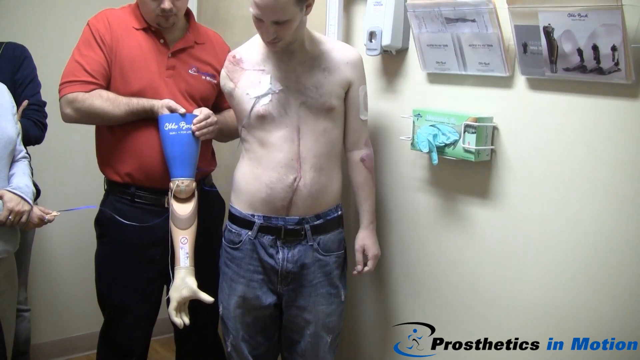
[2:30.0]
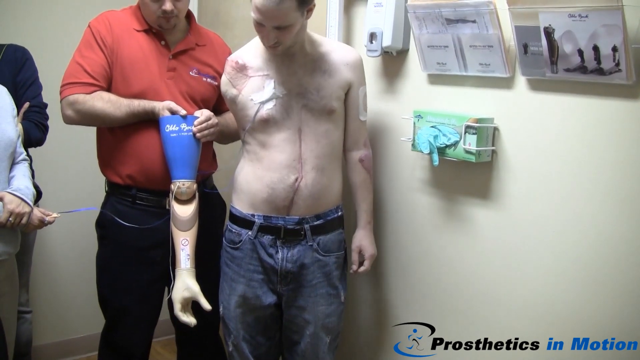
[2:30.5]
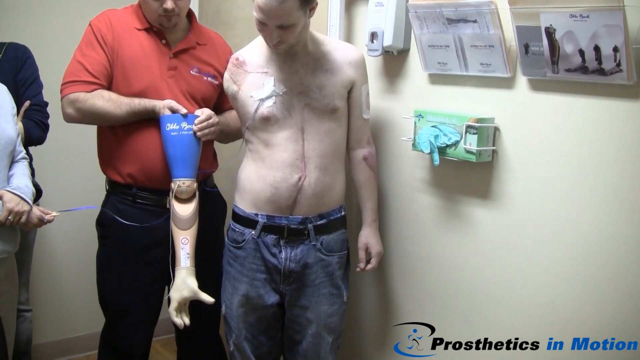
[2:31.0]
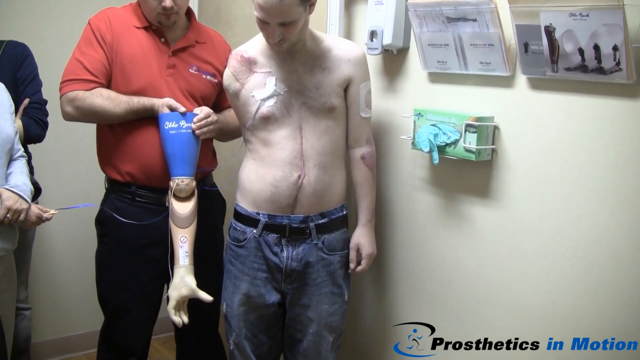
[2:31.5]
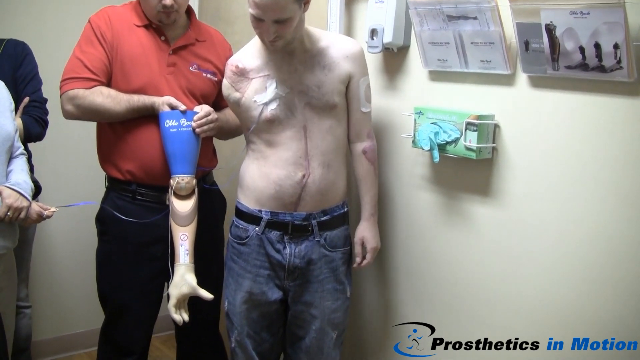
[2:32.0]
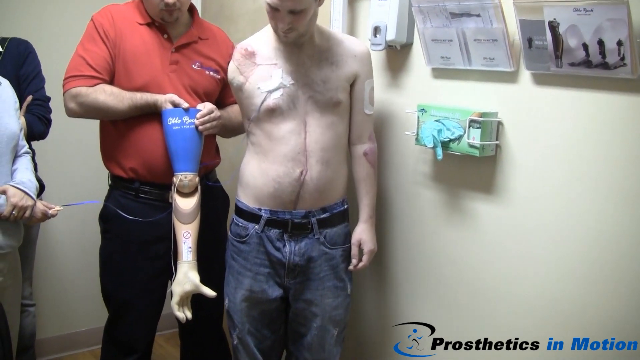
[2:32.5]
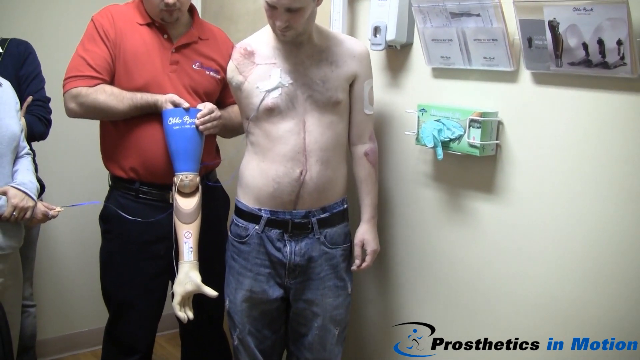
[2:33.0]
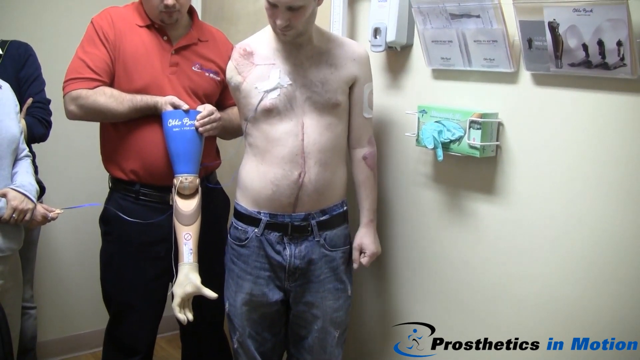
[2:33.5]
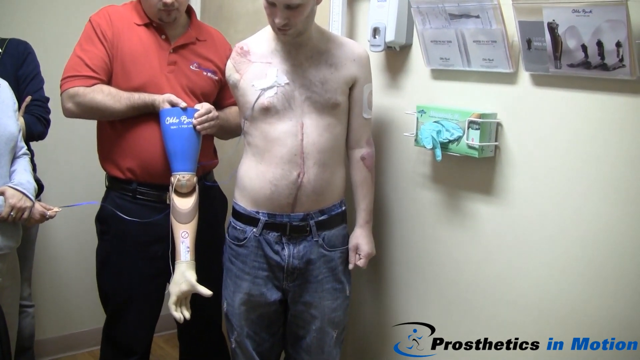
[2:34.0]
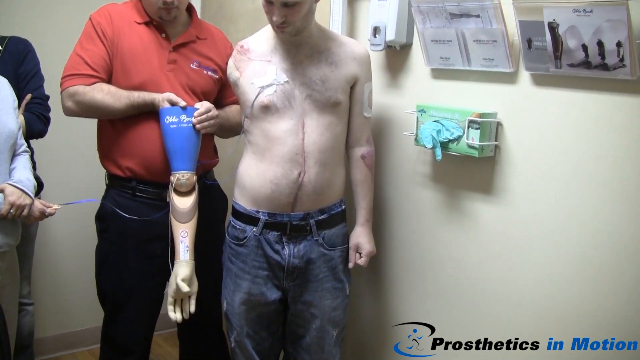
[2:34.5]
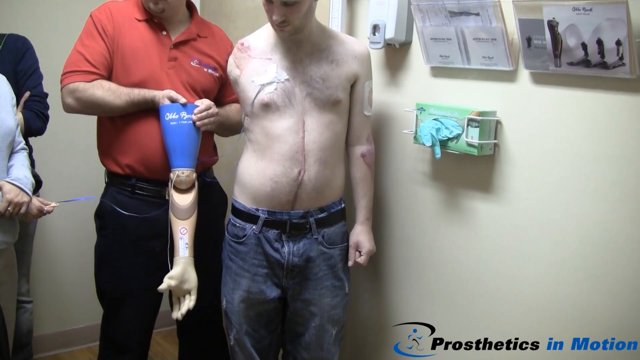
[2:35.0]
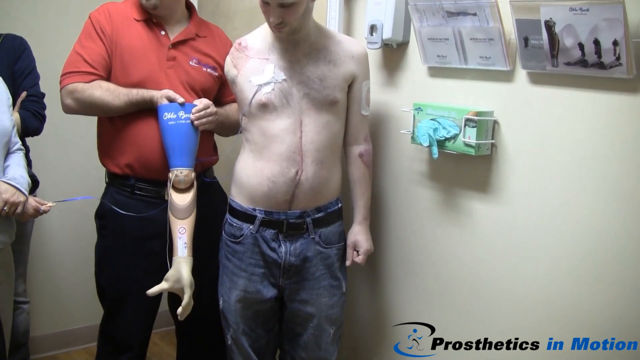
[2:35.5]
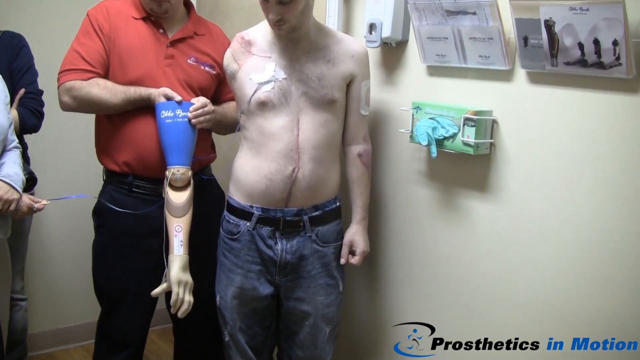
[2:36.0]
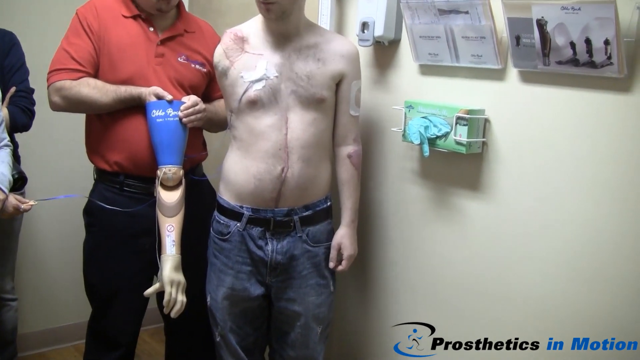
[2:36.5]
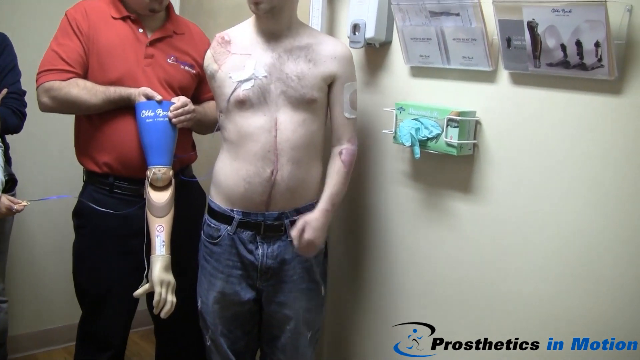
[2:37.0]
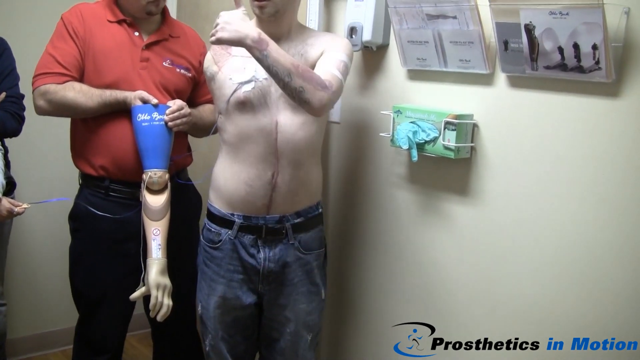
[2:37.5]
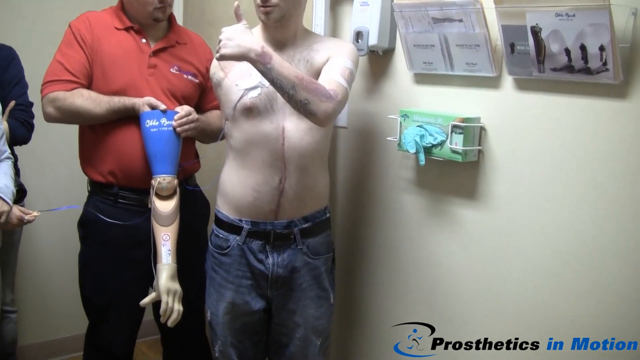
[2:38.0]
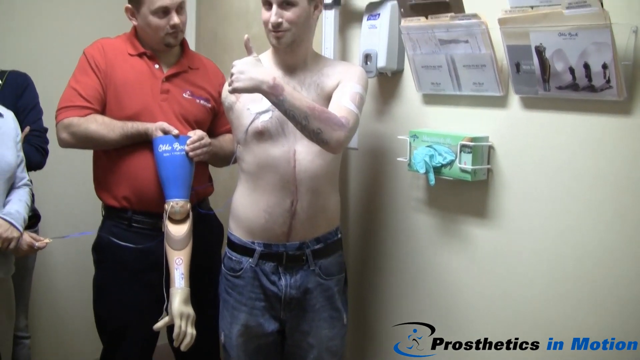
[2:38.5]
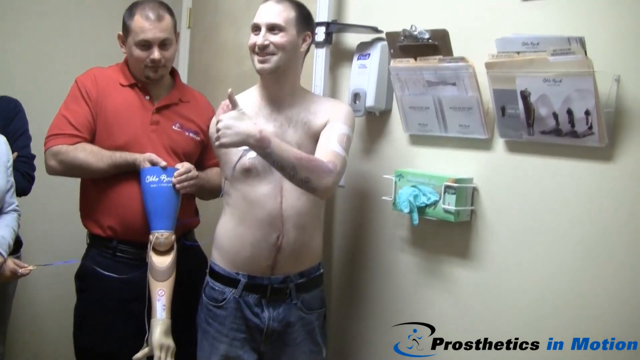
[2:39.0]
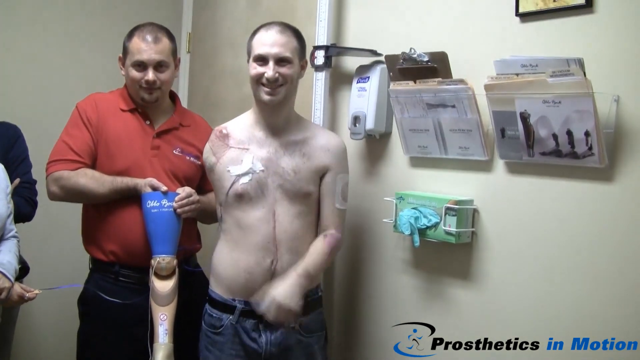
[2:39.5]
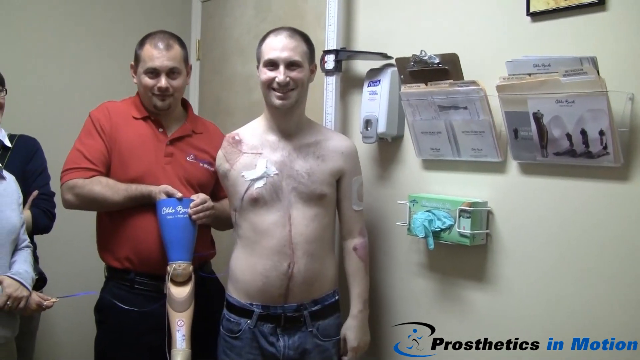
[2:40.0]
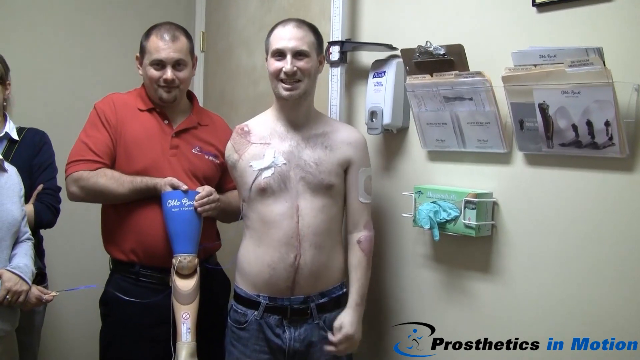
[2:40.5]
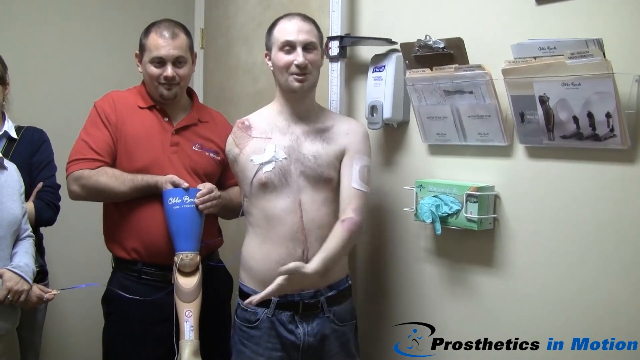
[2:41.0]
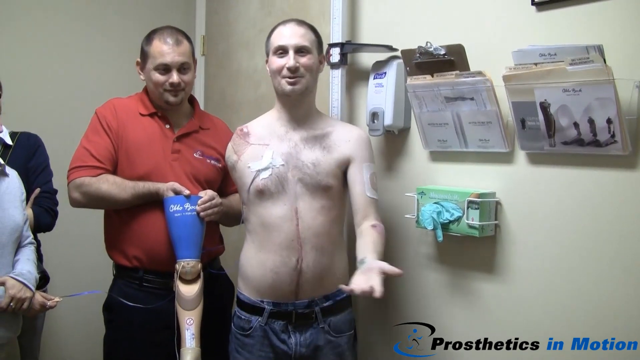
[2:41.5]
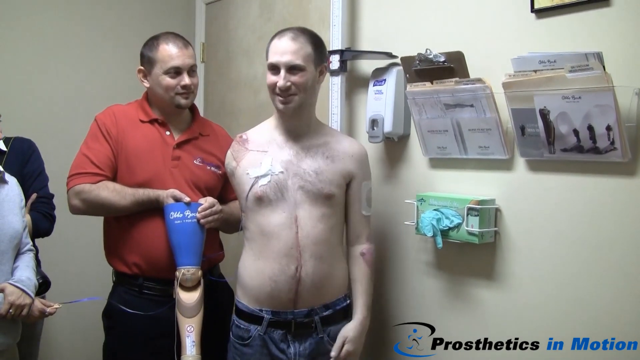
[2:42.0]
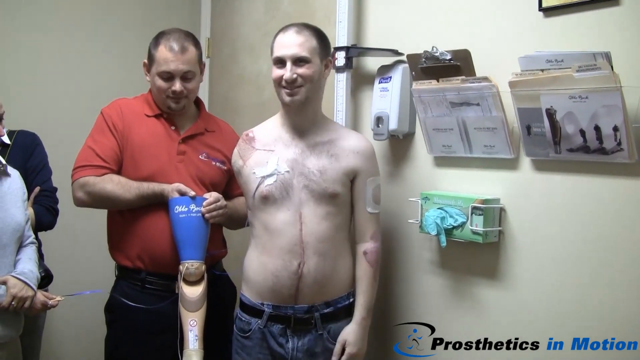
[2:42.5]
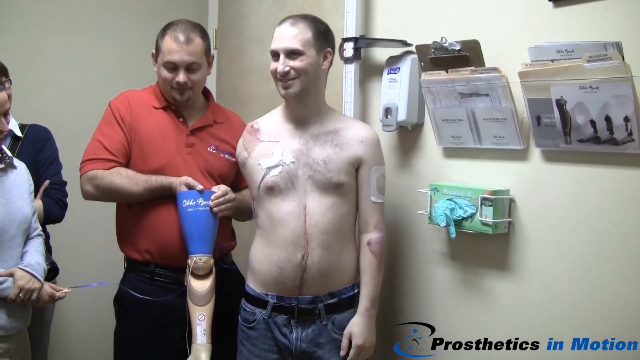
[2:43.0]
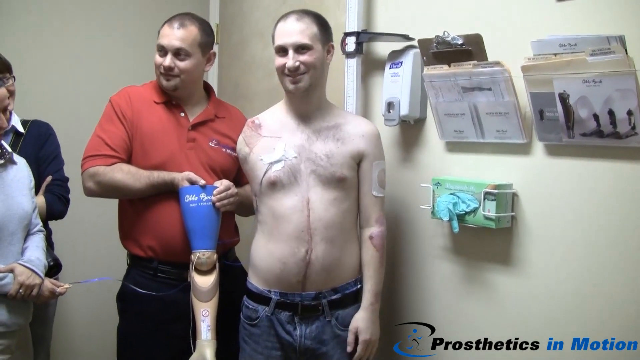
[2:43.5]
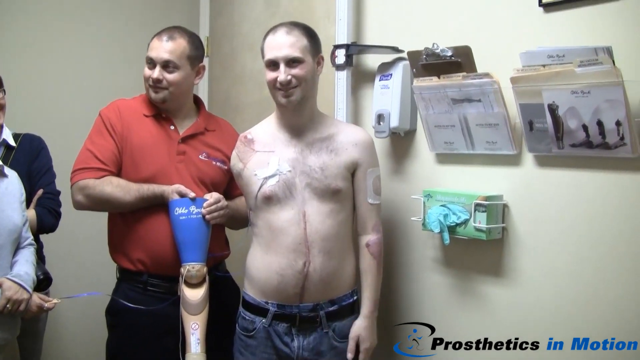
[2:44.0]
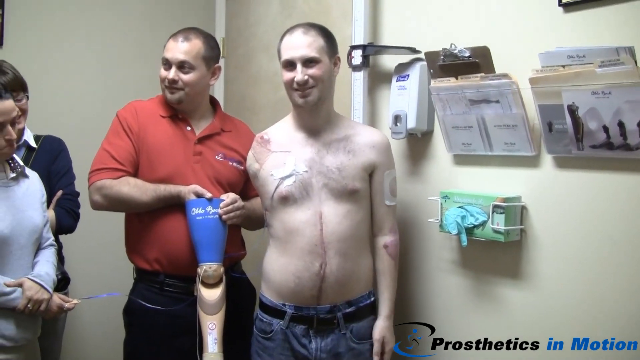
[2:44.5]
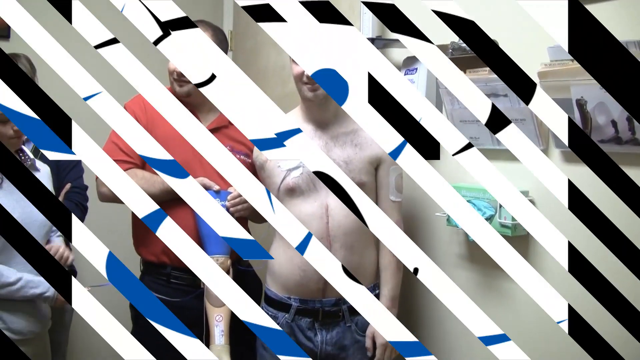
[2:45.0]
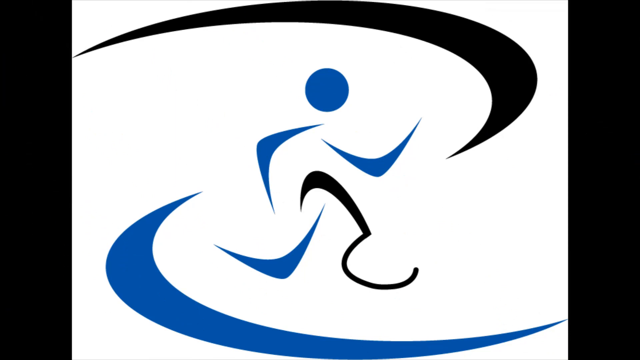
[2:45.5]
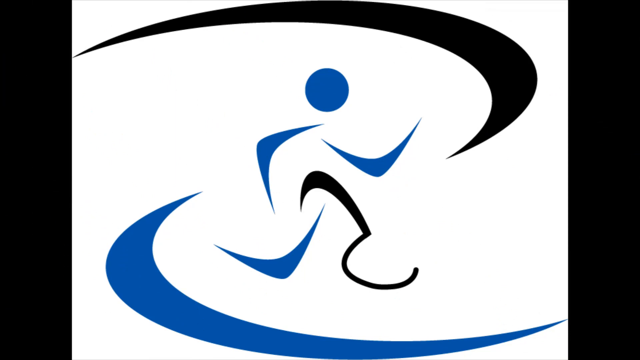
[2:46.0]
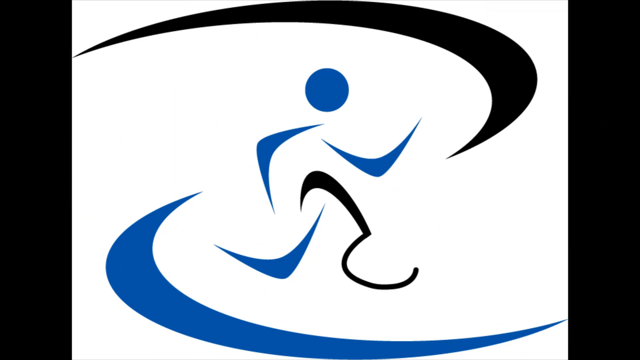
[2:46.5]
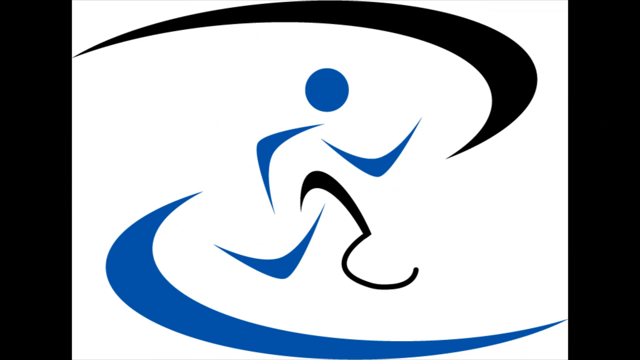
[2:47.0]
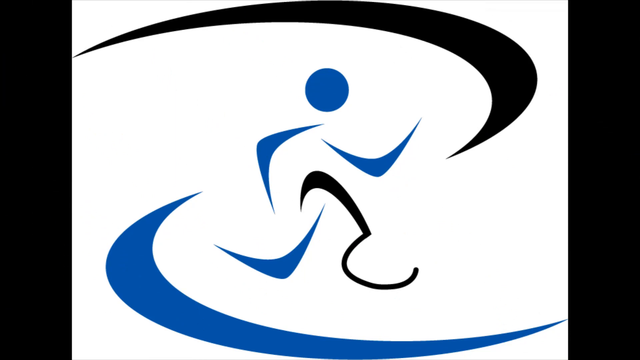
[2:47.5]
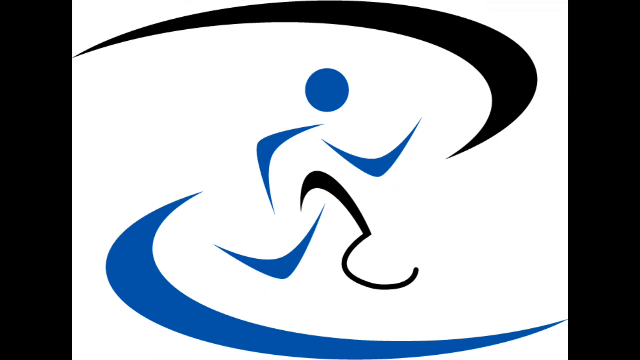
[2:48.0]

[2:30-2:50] The patient with the shoulder amputation looks at a demonstration of how the prosthetic arm works. A member of staff in a red t-shirt holds the prosthetic arm at the top of the blue section, with his right hand inside the top of the prosthetic arm, and seems to be controlling its movement. The arm is in a folded position and then comes down to a straight position. At this point the hand has its thumb and fingers outstretched. The patient looks on, and the thumb extends further out to the side. The man flexes his shoulder downwards. He has an electrode attached to his chest, secured by tape, and it is possible that he is moving the hand, which now turns at the wrist to the side as he moves his shoulder blade. The hand twists completely round so the thumb points in the opposite direction. The patient lifts his left arm and gives a thumbs up, smiling broadly to the people in the room. He motions his left arm forwards and to the side. They all appear happy with the outcome, and the man in the red t-shirt smiles. The scene then changes to the company logo with the graphic running figure with blades for feet. There is a swirly, Nike-type arrow in black at the top of the page and one in blue at the bottom. The video ends.